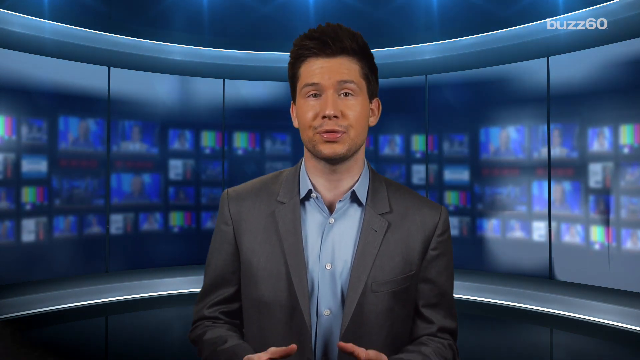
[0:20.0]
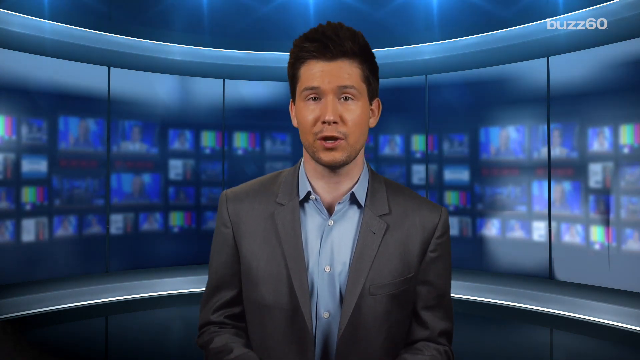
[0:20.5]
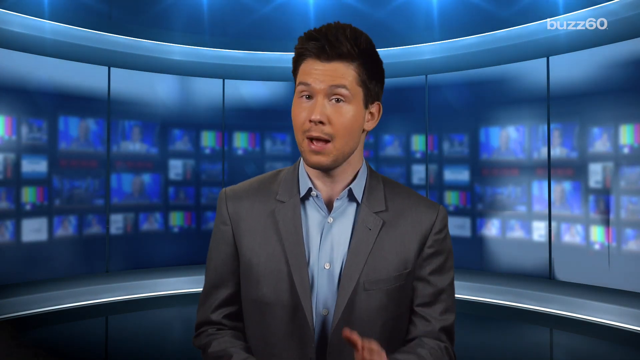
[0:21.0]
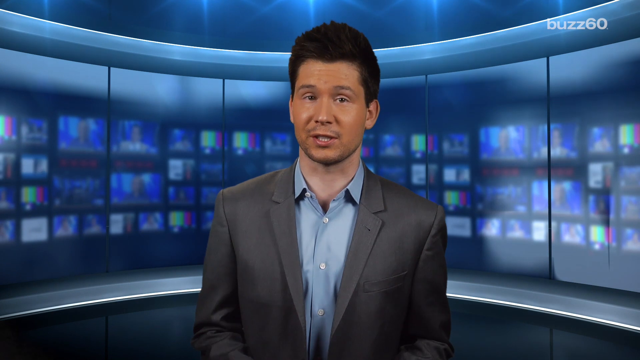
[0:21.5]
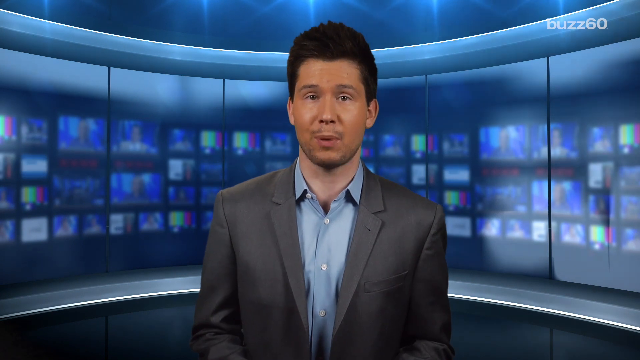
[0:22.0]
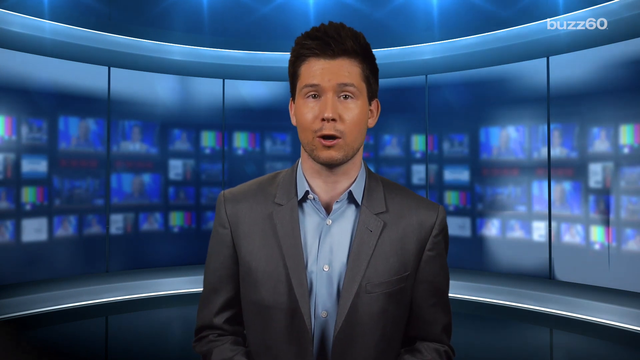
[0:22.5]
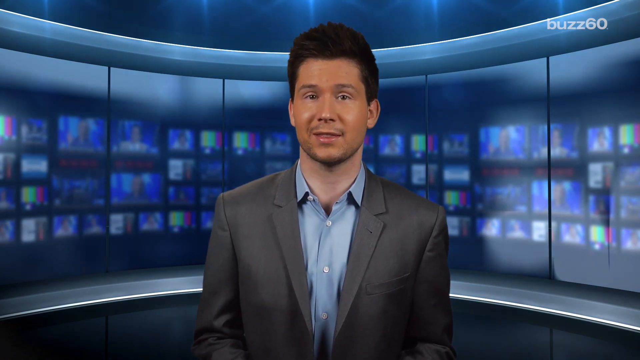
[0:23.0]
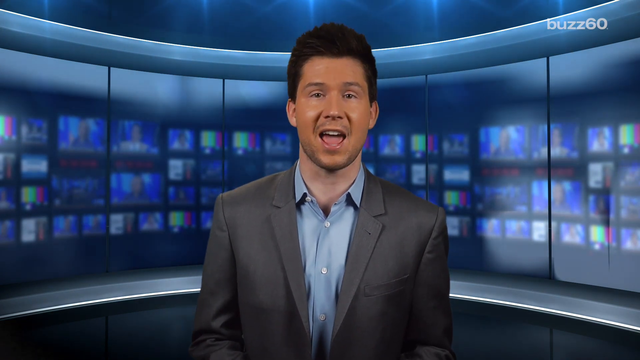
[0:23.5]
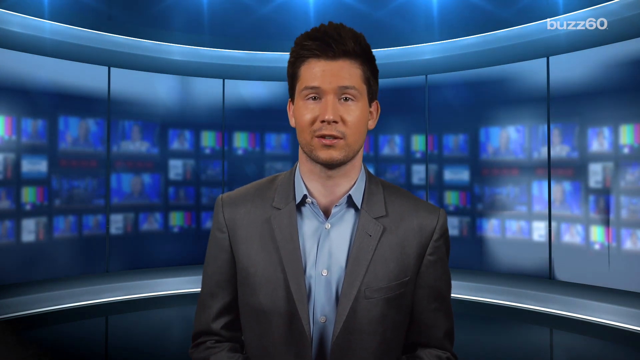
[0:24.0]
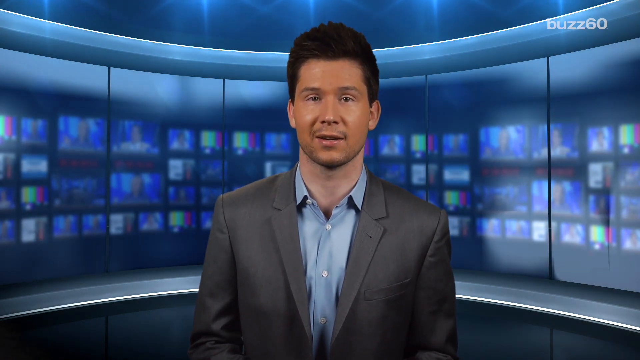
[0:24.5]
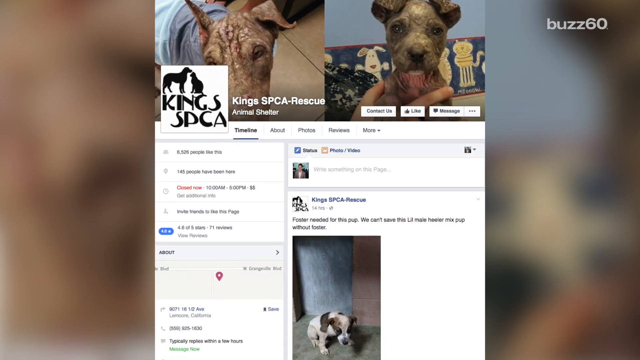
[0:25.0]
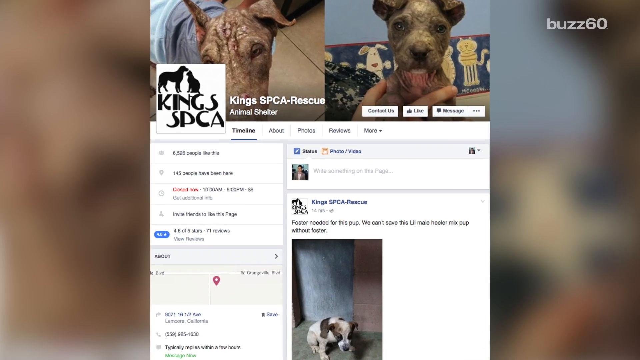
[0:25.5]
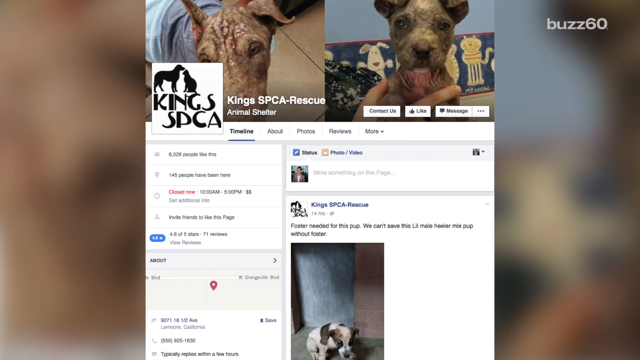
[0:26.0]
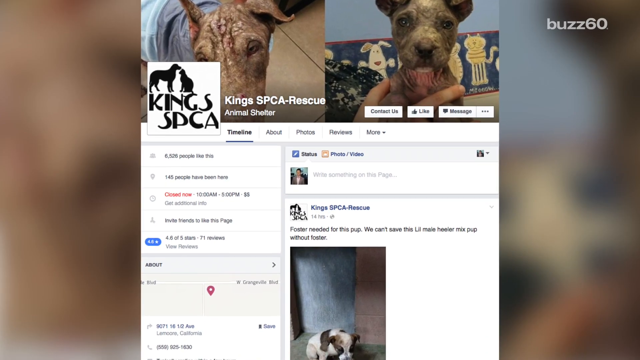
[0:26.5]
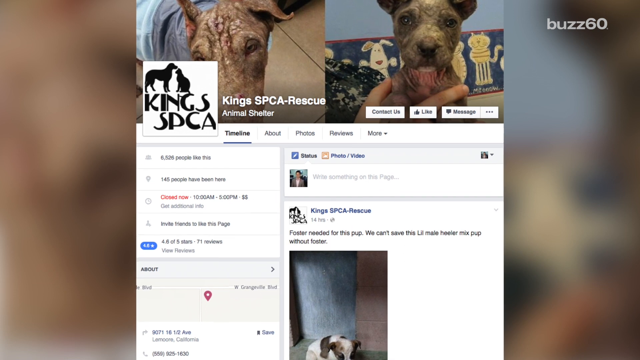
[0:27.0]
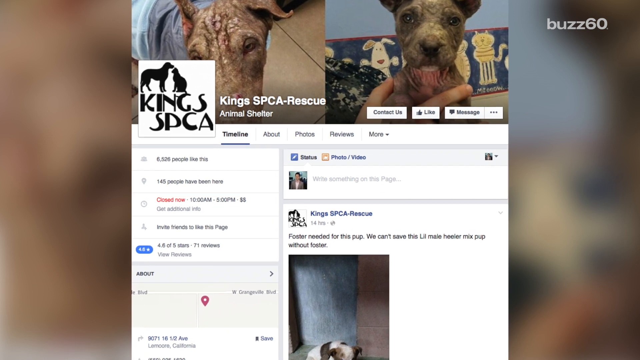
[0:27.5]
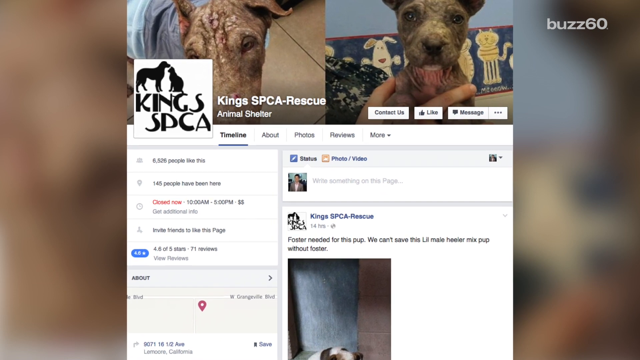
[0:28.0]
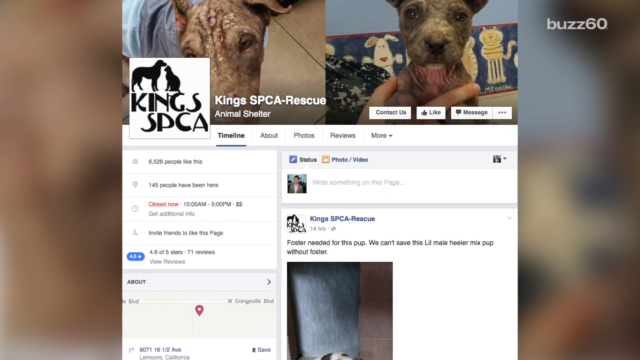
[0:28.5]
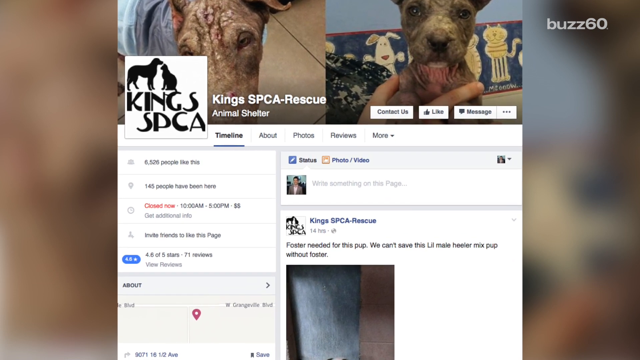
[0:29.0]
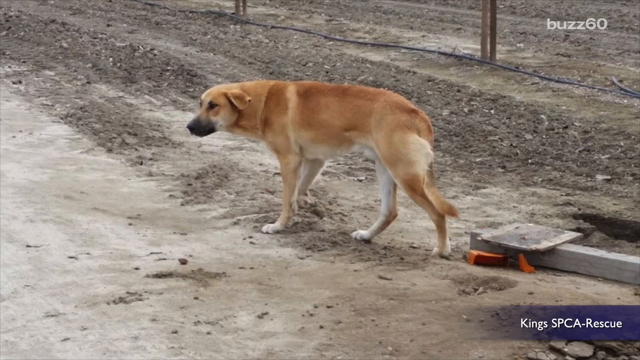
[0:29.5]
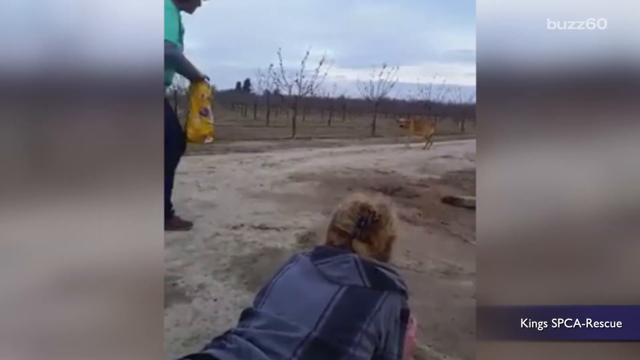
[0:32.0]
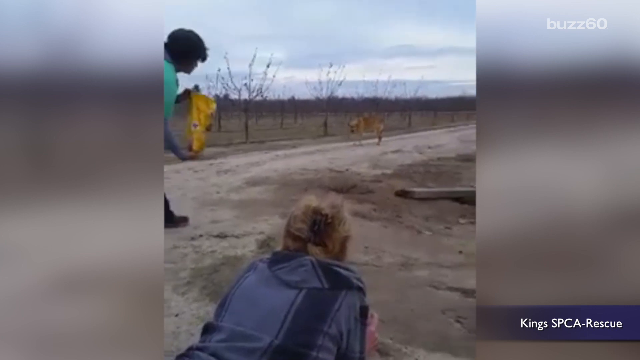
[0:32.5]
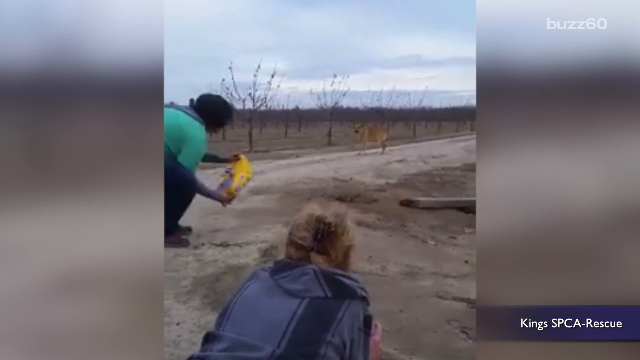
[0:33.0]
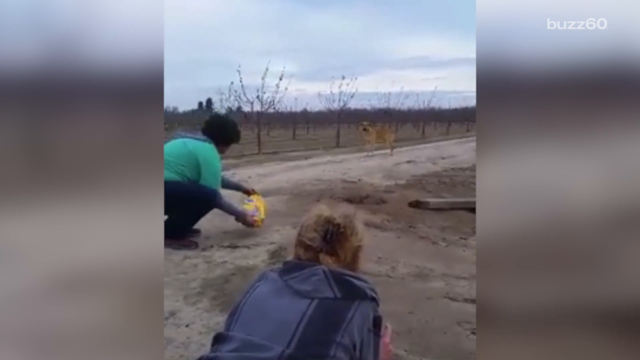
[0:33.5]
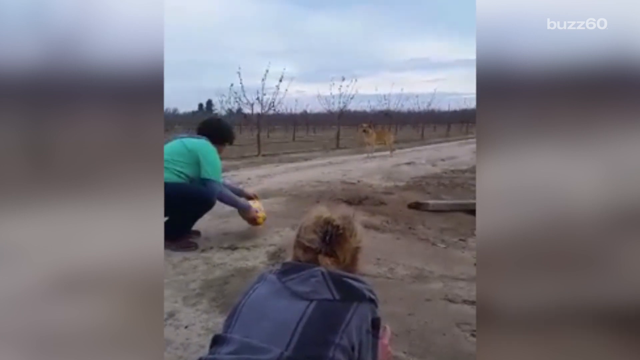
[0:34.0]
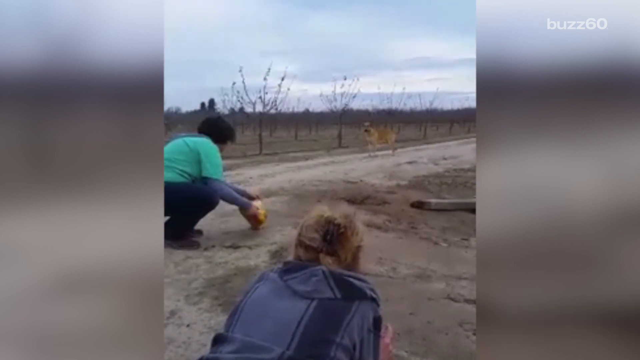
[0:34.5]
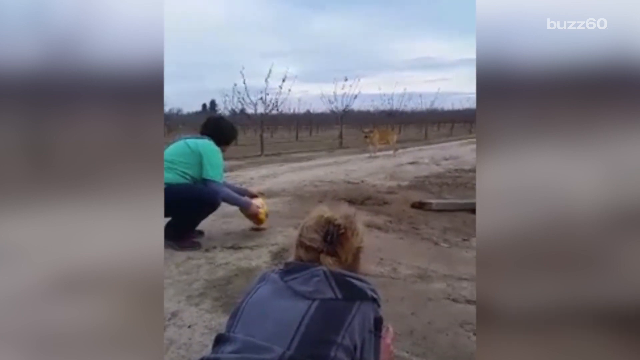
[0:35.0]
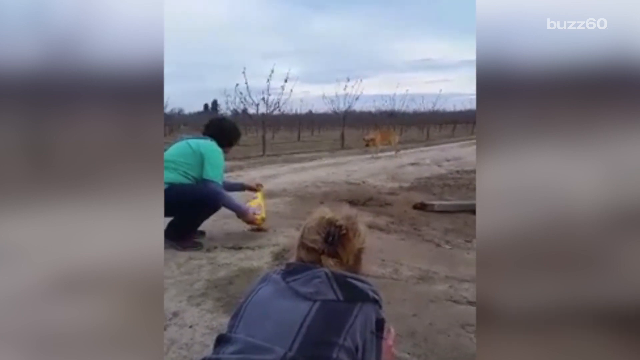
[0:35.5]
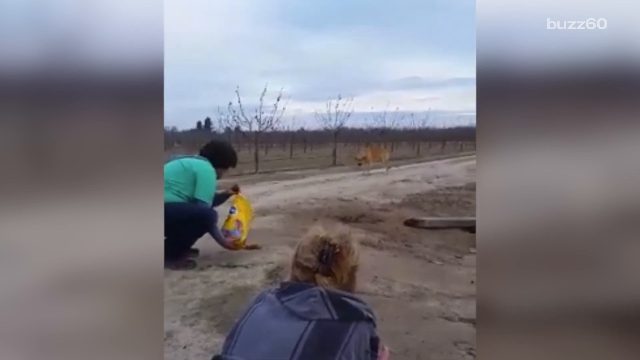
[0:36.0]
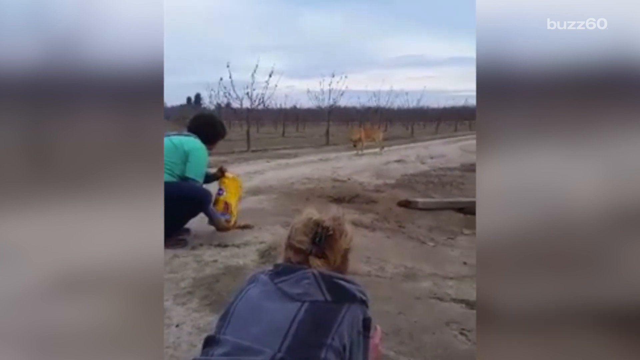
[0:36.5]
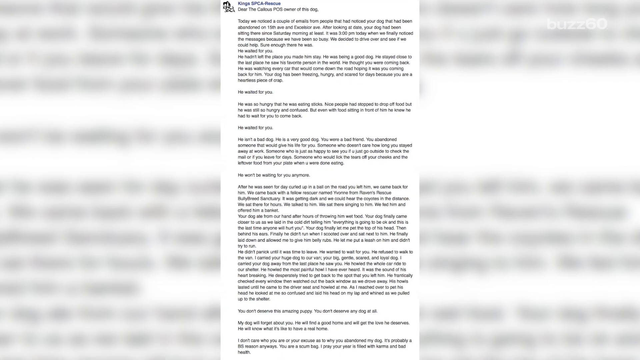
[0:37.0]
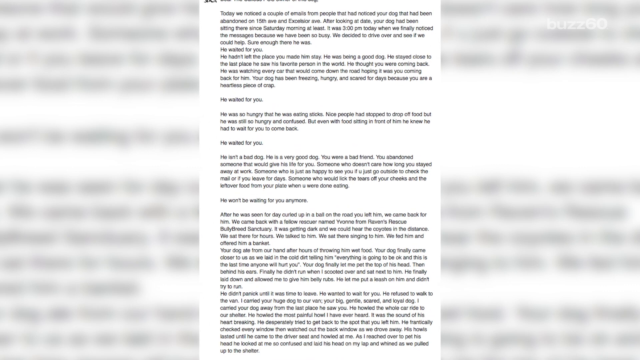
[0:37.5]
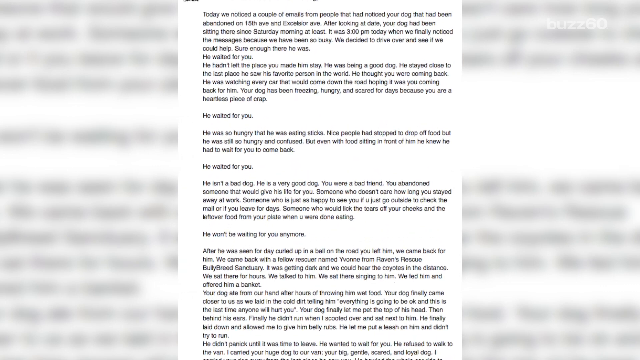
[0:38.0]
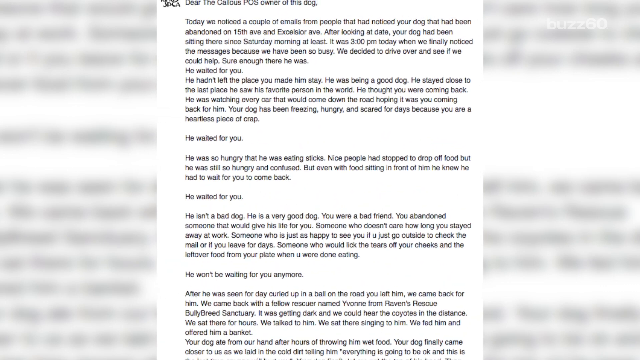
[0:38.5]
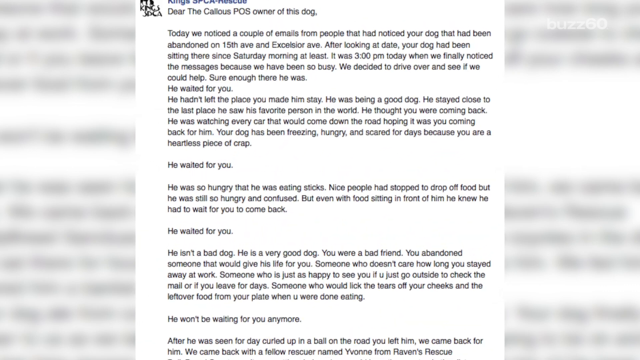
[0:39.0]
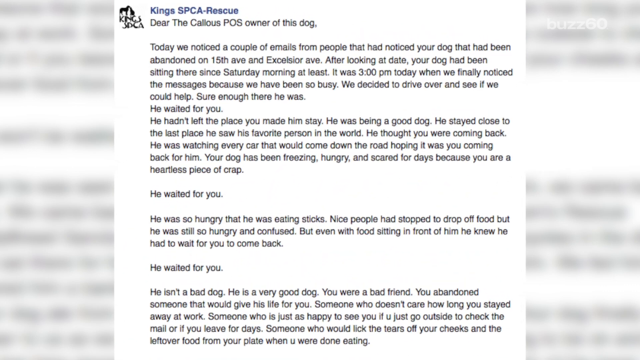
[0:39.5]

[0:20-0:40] The newscaster is still talking. People try to lure the dog, and then another person also tries to lure it. A screen appears that looks like a long post from social media, apparently related to rescue workers and an animal shelter; the people seem to be a group that rescues animals and are apparently trying to rescue the dog to take it to an animal shelter.